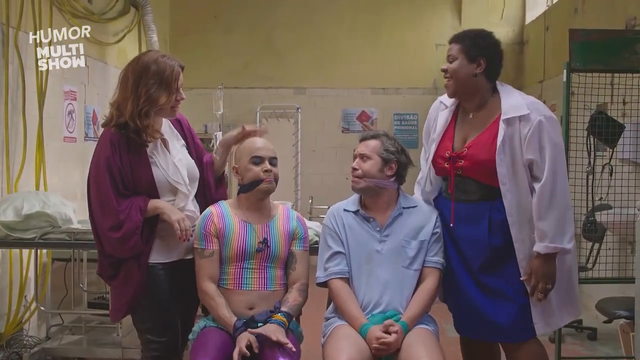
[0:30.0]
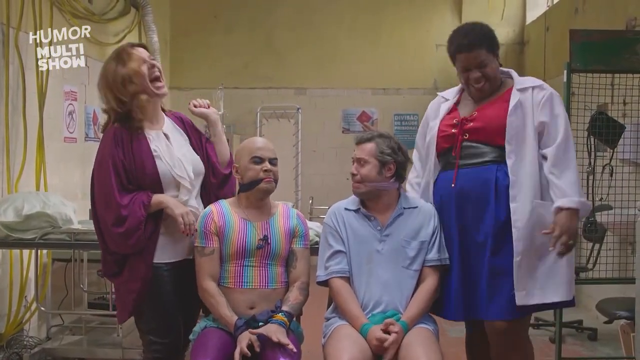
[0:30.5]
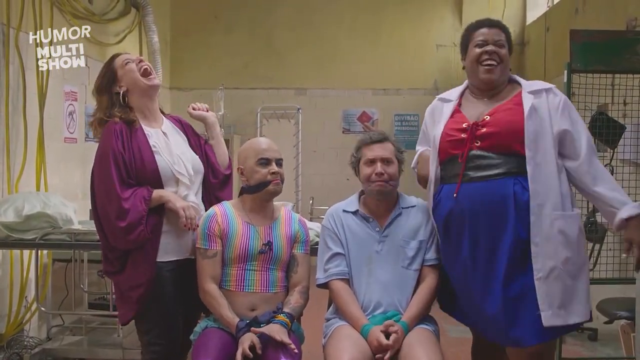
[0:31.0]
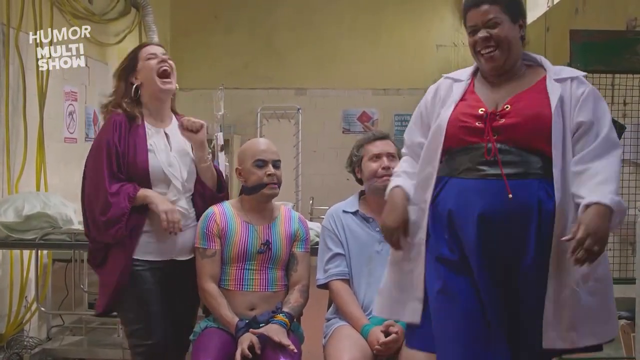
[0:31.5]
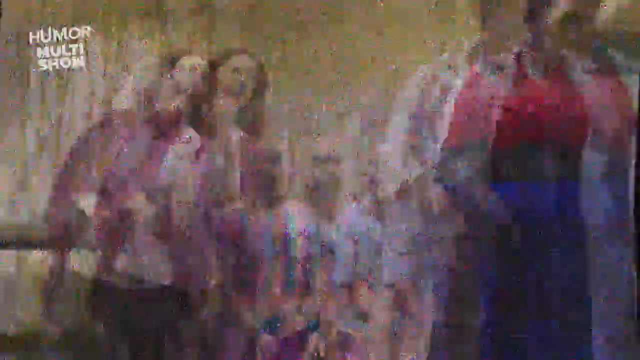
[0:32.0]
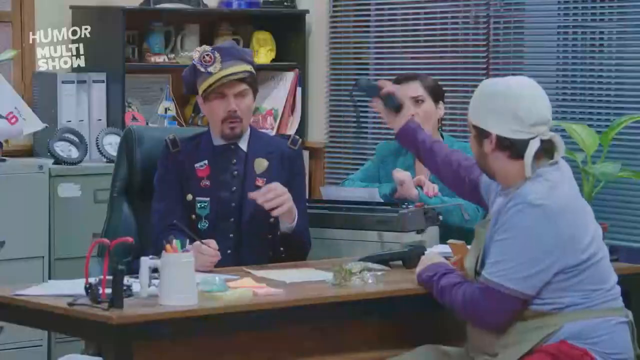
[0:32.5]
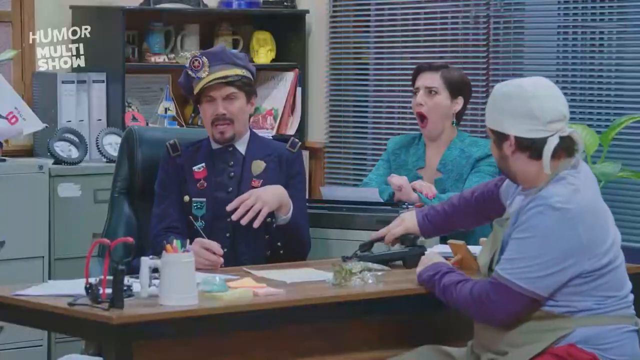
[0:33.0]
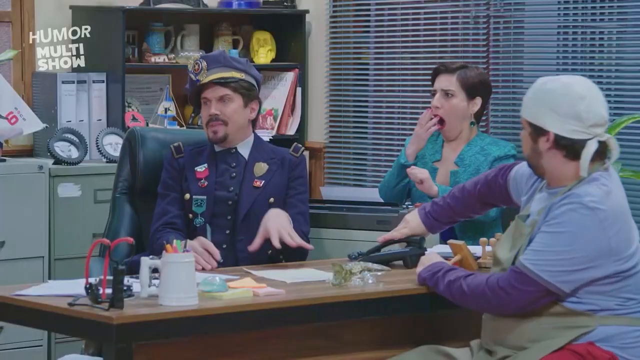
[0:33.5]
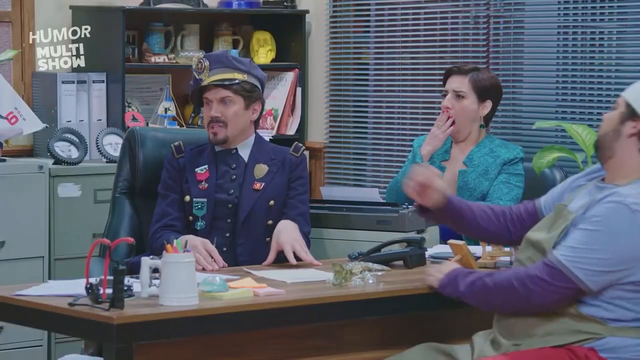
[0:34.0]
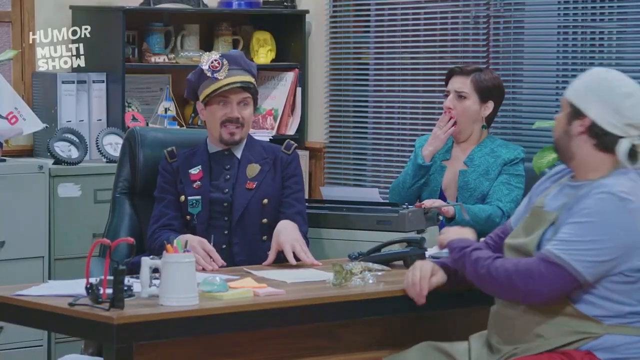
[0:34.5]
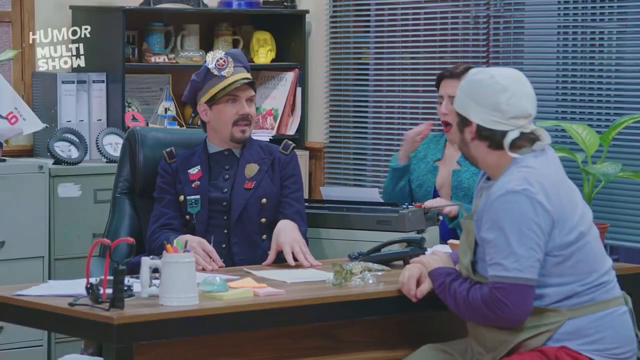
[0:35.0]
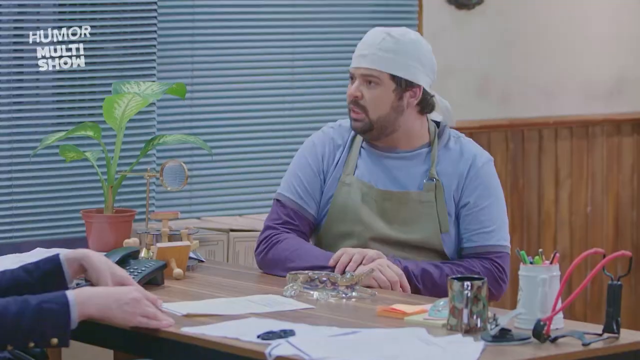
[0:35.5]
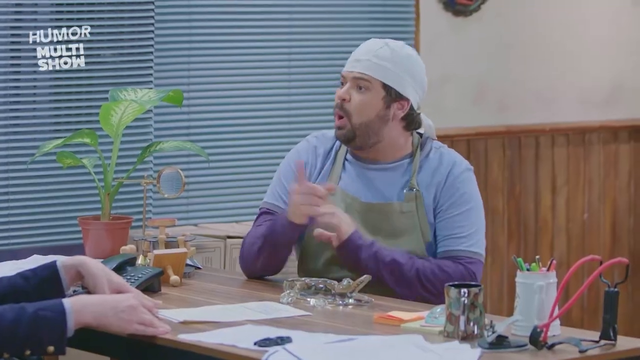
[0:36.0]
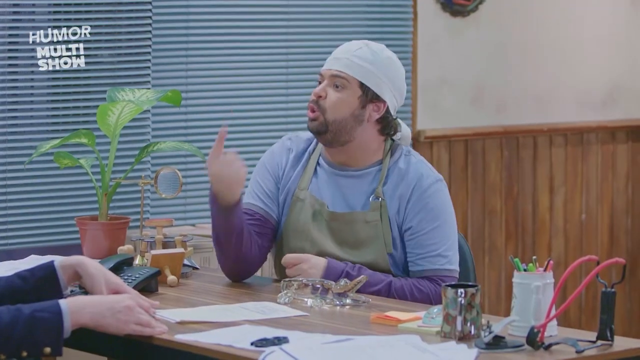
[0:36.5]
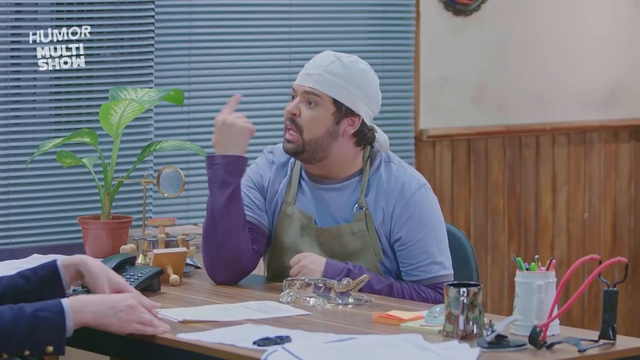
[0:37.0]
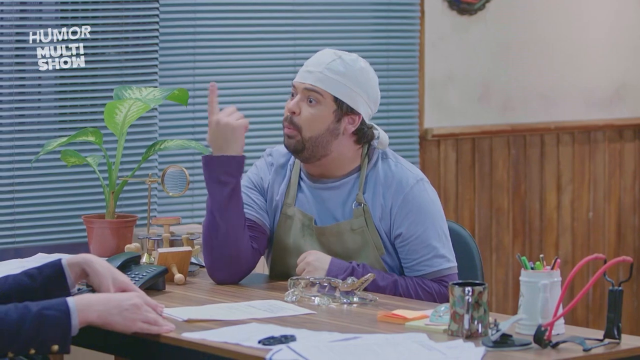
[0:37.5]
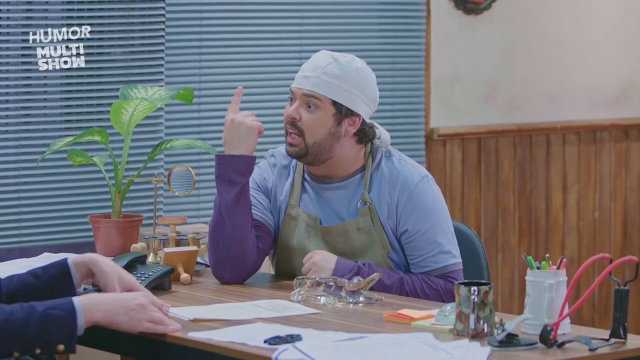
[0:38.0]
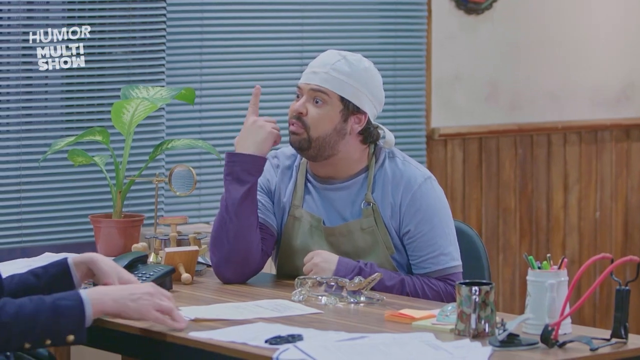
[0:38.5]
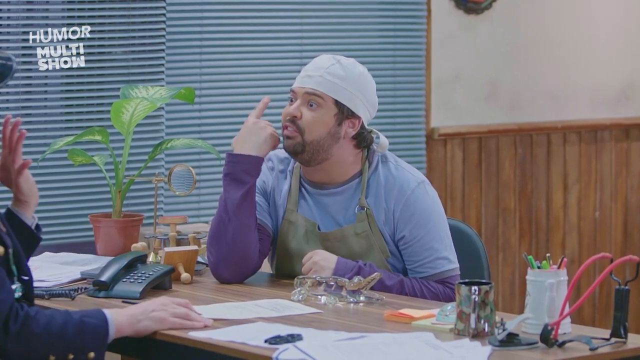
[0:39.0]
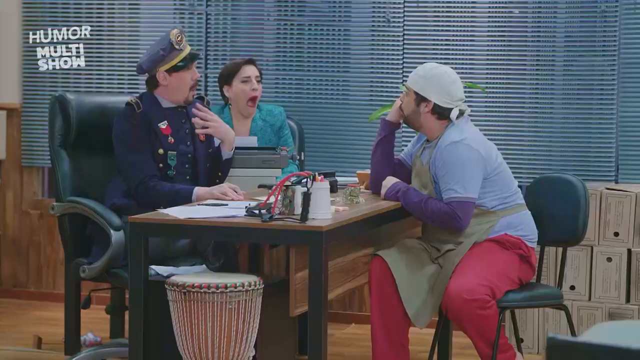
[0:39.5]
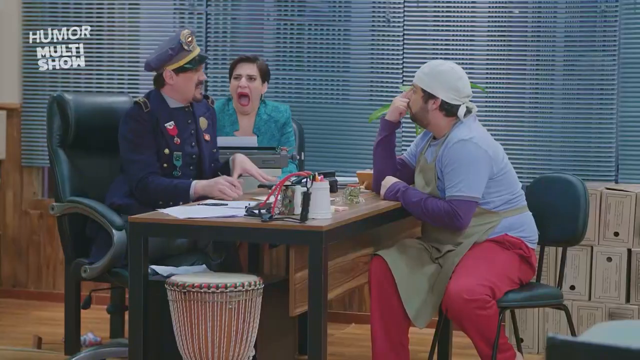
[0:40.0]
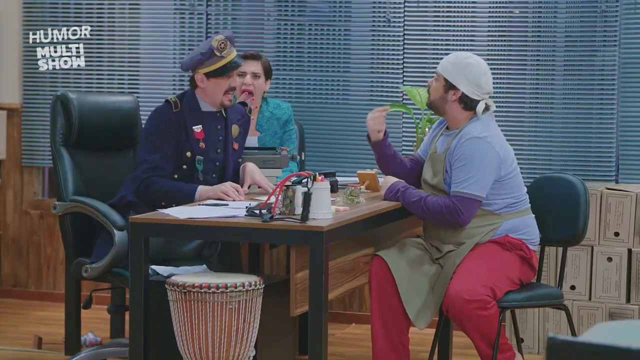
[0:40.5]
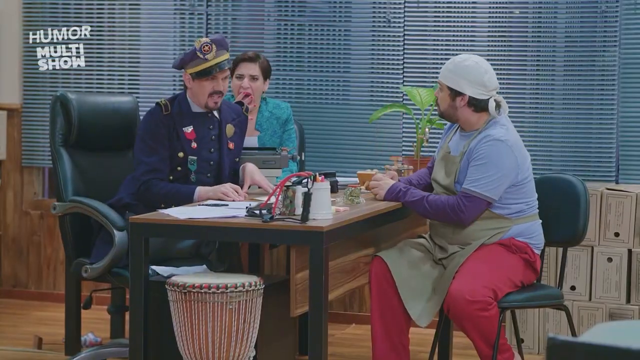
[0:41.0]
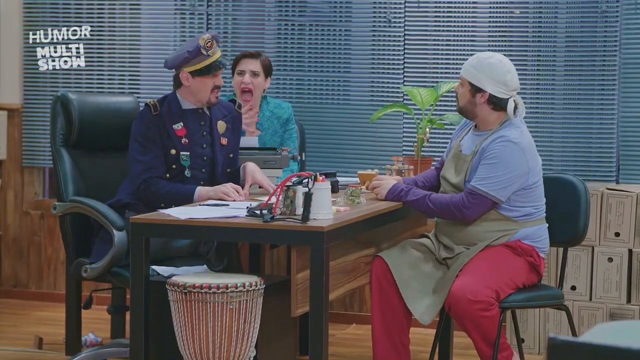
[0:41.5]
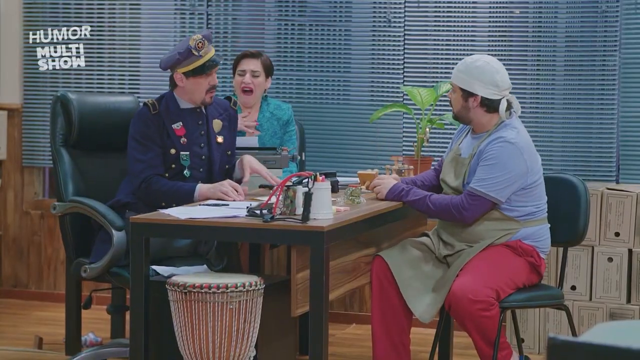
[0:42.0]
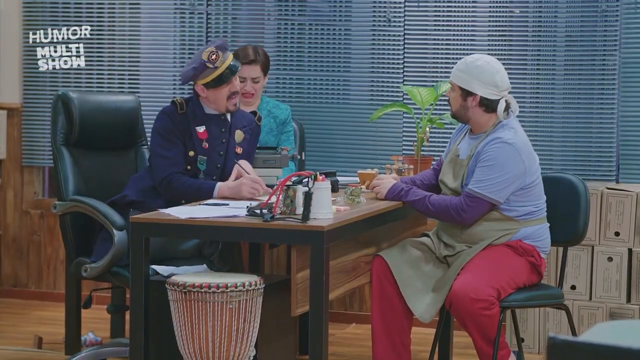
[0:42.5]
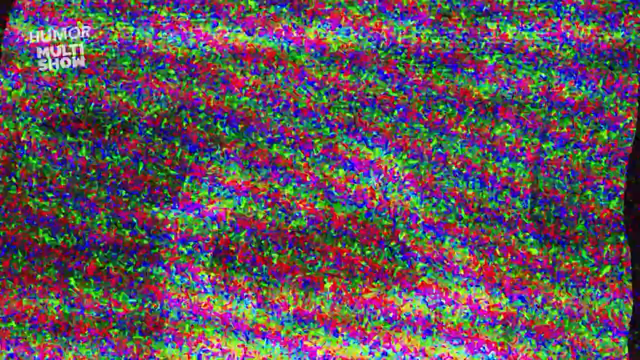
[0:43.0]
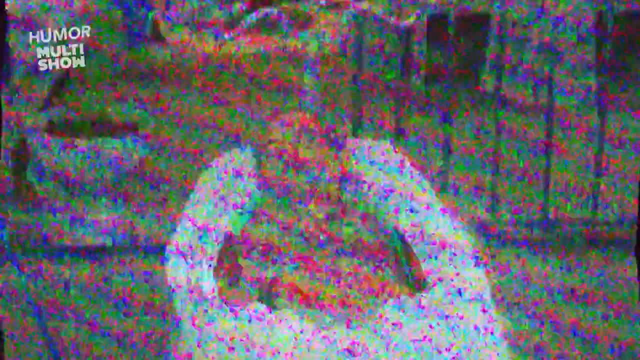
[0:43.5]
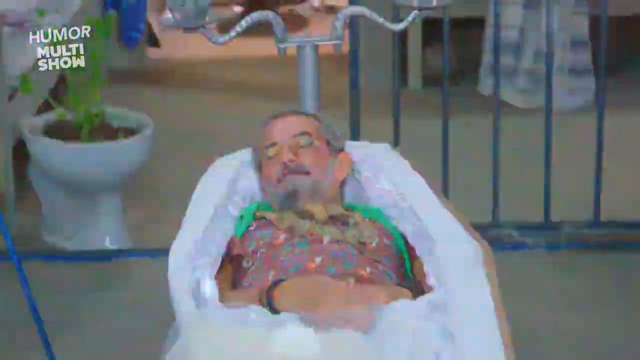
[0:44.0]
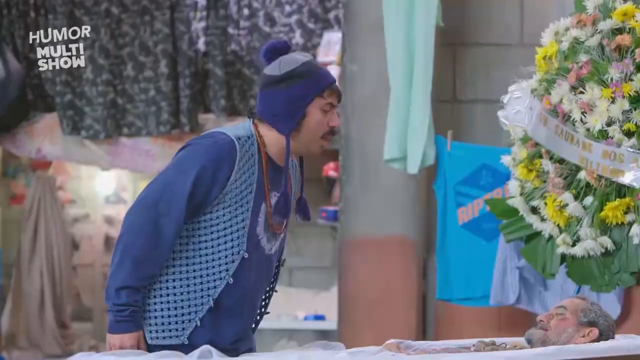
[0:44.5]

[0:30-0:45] The two ladies laugh at the tied-up men and walk away from them. Squiggly lines lead back to the three people in the office, who are still fussing. After more squiggly lines, someone appears to be wrapped up in a bathtub, seemingly on ice, looking dead. Back in the office, the man in the military uniform seems a little effeminate, the man in the surgeon cap is still fussing, and the lady at the typewriter is part of the conversation. Returning to the man in what looks like an ice bucket or tub of ice, a man quickly talks to him. This man wears a blue hat that looks like a long hat from Peru with strings, and a blue comedic outfit. He says a few things to the man, who may just be dead. The video jumps from scene to scene, and the man in the surgeon cap points to the sky, trying to make a point.